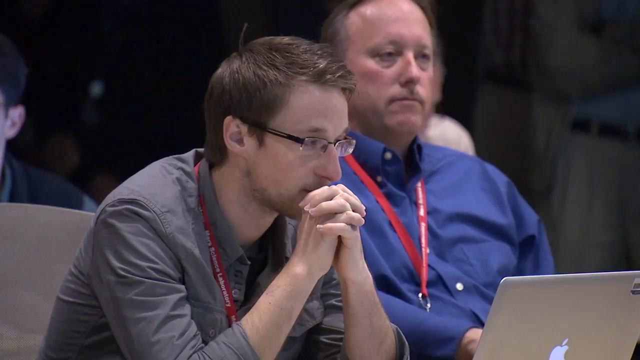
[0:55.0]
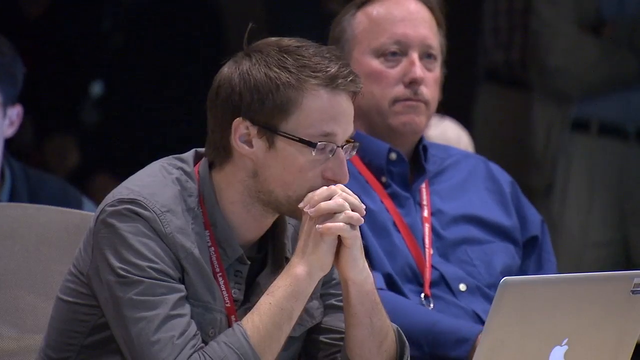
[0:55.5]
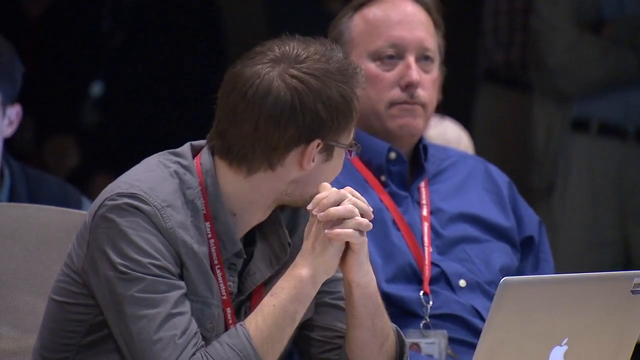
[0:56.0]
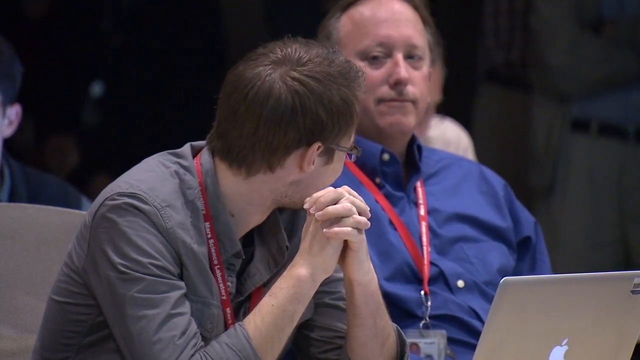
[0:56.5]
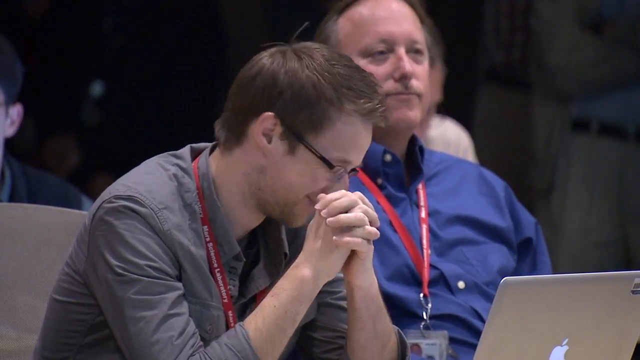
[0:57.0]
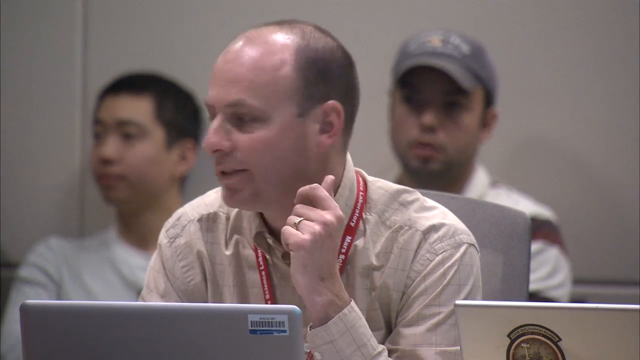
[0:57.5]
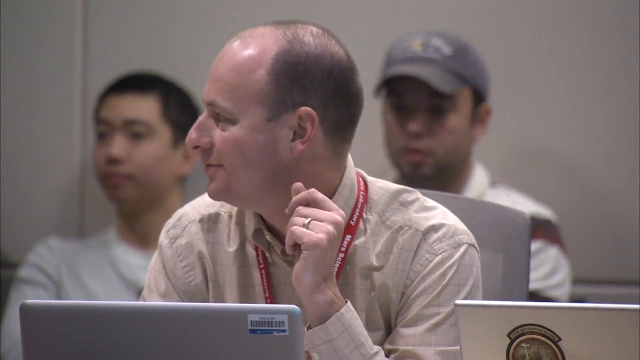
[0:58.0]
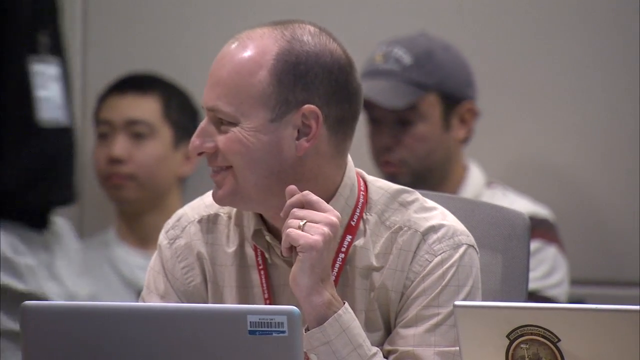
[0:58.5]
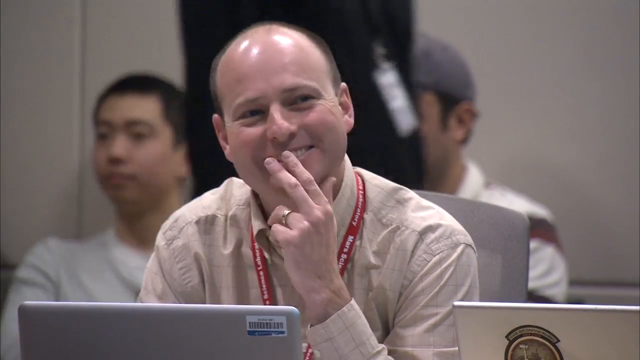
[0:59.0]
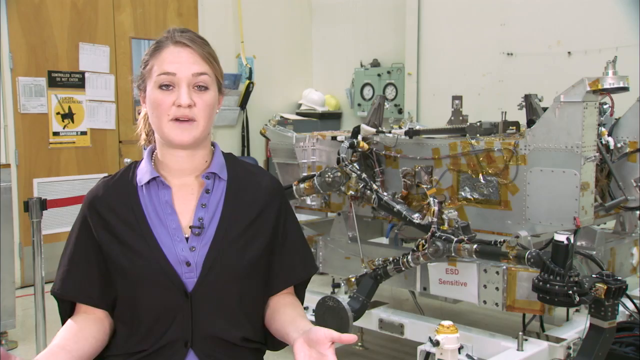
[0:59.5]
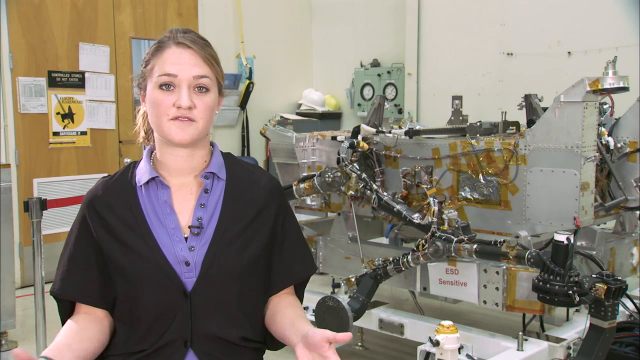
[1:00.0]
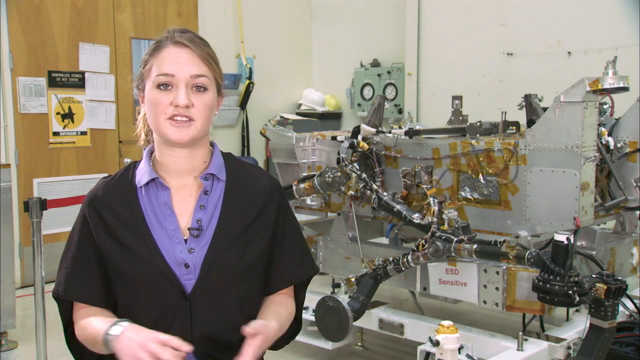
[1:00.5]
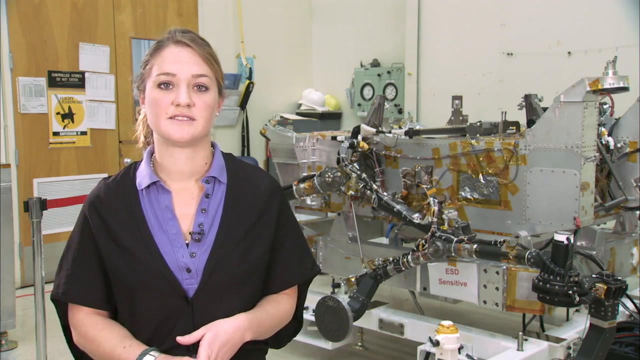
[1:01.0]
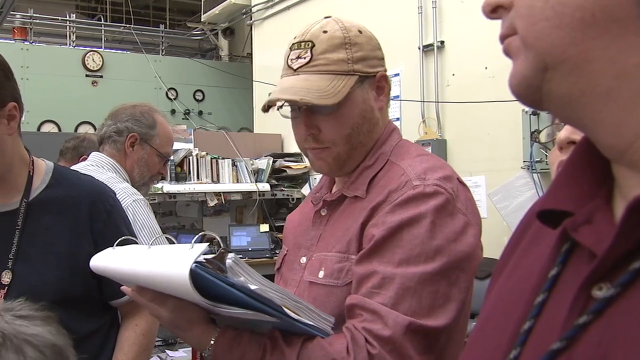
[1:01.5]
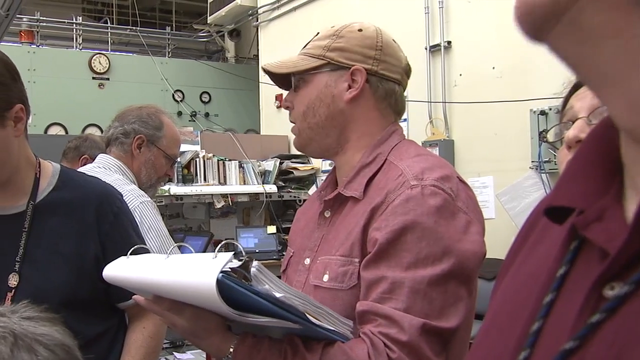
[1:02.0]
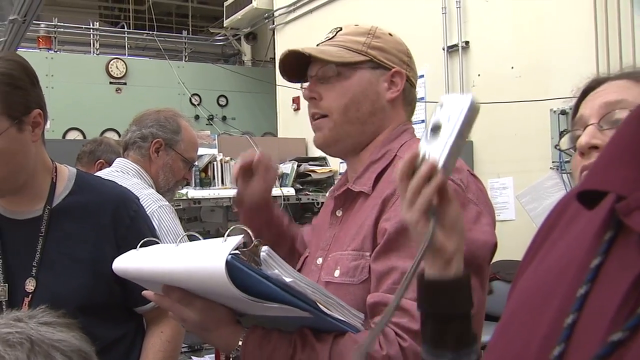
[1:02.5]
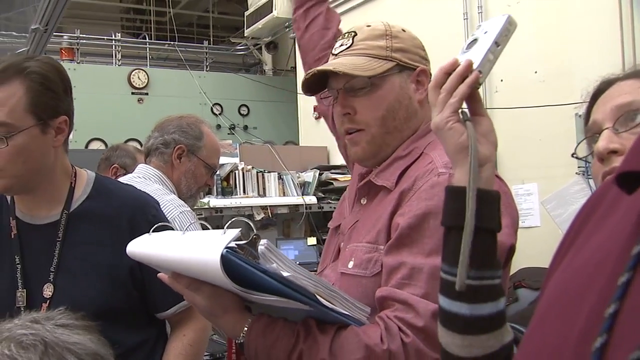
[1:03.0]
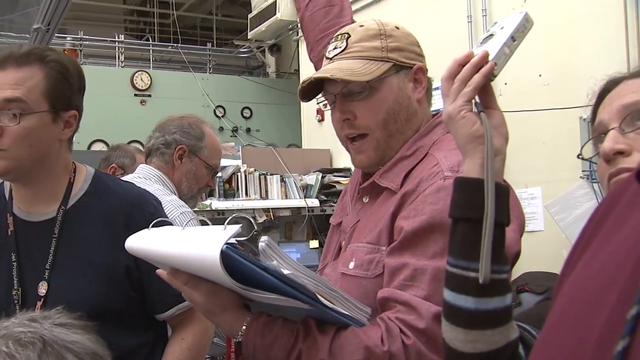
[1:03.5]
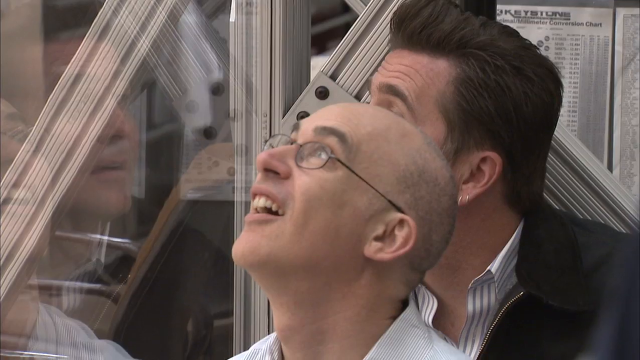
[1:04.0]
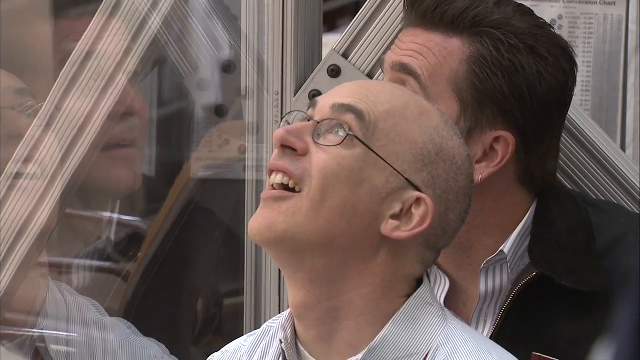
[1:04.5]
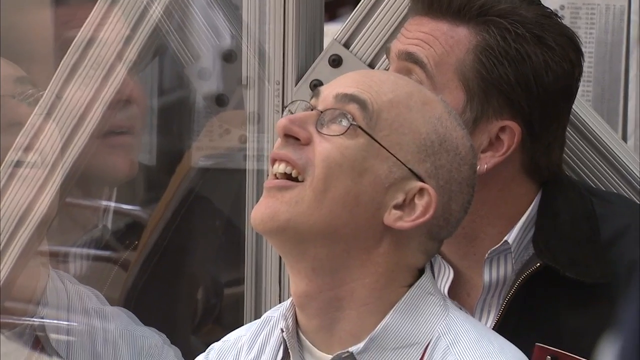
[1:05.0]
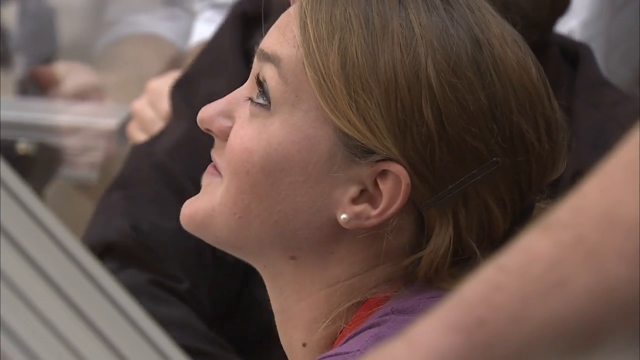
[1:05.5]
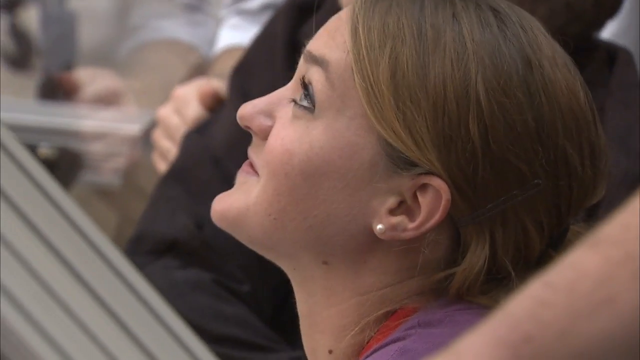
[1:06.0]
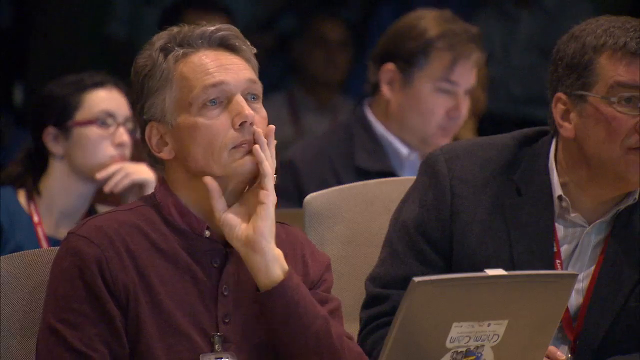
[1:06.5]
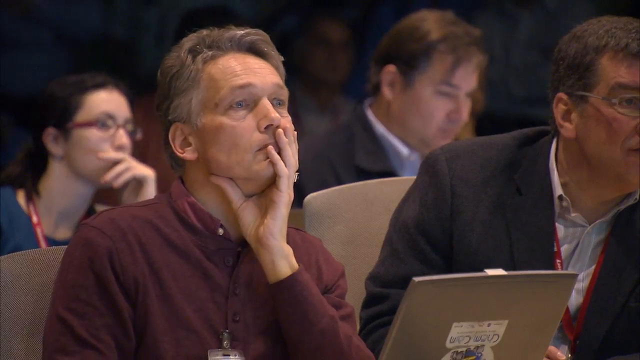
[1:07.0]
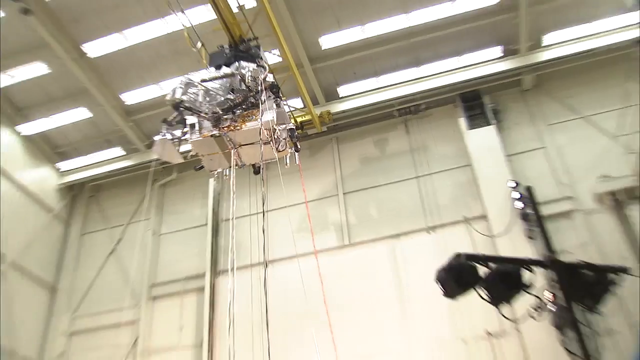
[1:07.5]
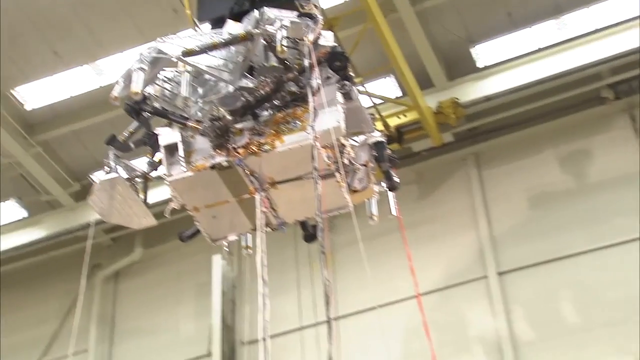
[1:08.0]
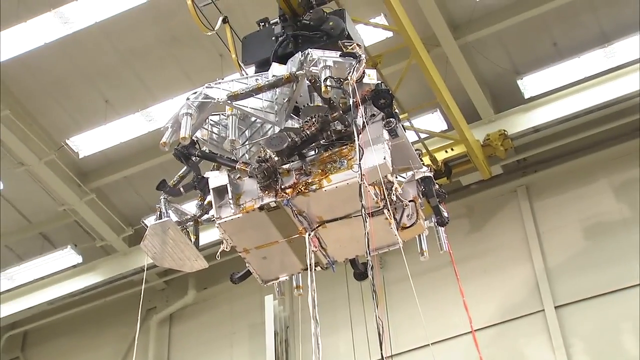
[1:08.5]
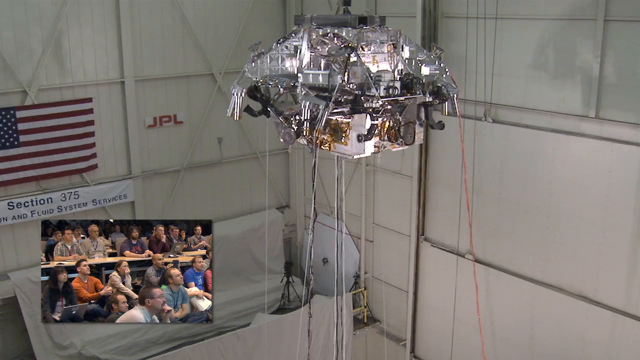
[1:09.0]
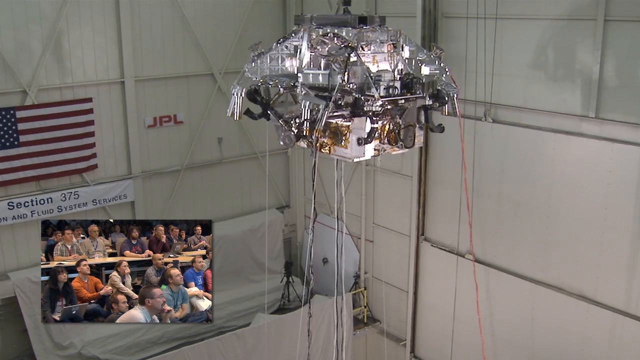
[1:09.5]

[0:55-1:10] In a room, different men smile, laugh and talk to each other. Men and women then look up at a rover set up for a Mars landing test inside a building; it detaches from the top part and the bottom falls toward the ground. The people count down as they wait to see how the rover would work if it were really going to Mars. They all appear very happy and excited, are dressed in very casual clothes, and seem enraptured by what they are watching. People are seen talking numerous times, and at one point a woman wearing a purple shirt and a black top discusses something about the rover.